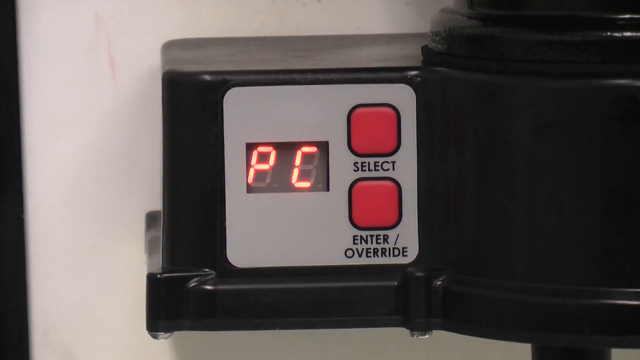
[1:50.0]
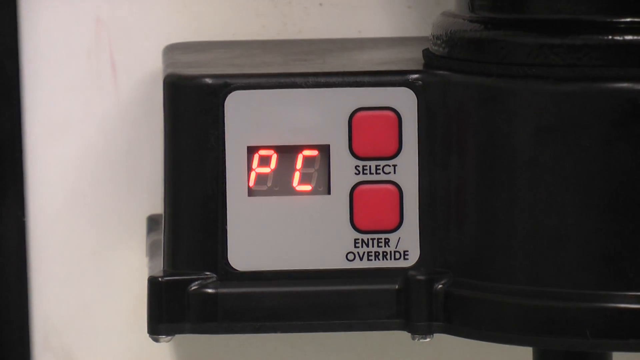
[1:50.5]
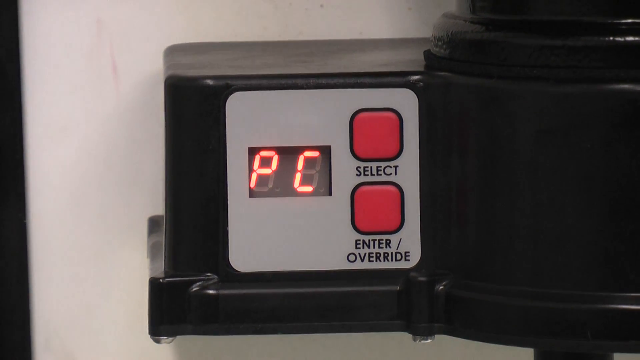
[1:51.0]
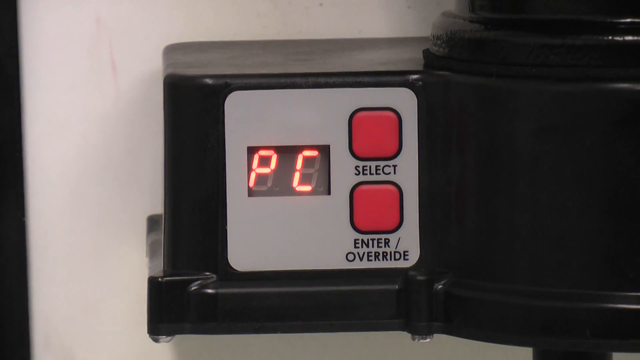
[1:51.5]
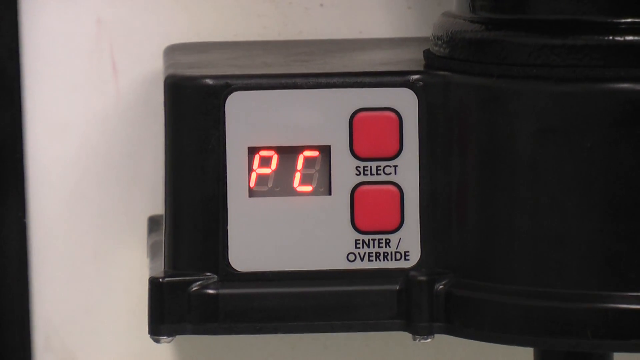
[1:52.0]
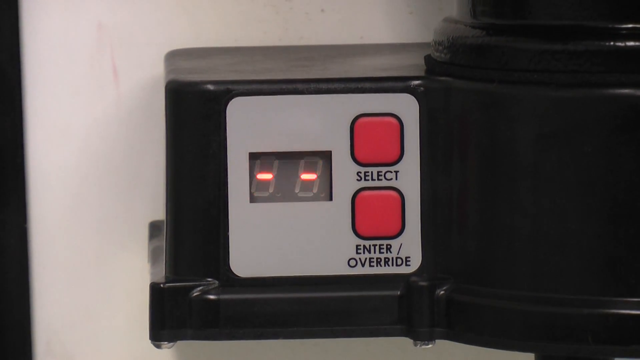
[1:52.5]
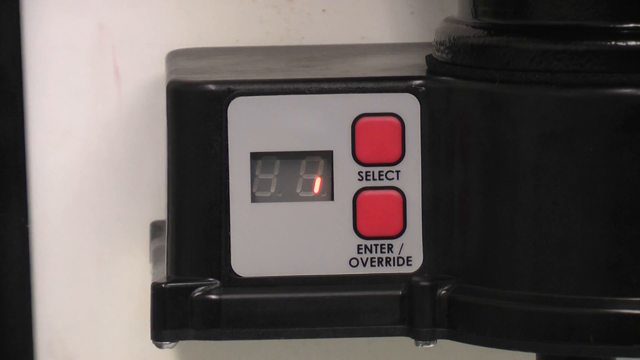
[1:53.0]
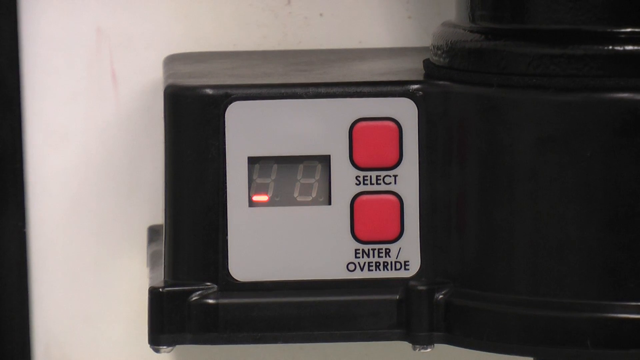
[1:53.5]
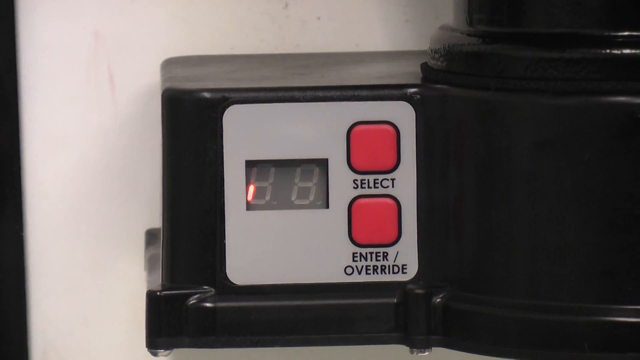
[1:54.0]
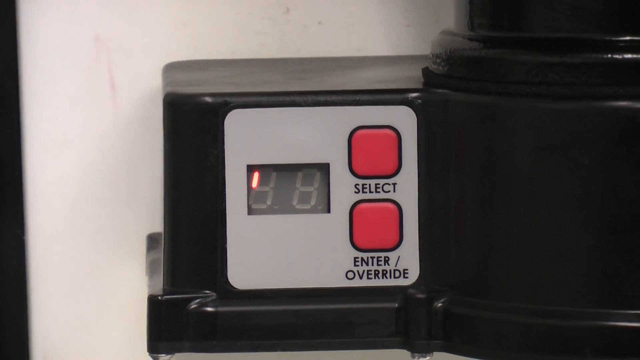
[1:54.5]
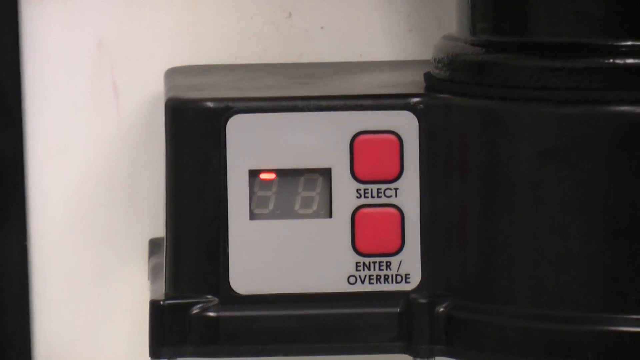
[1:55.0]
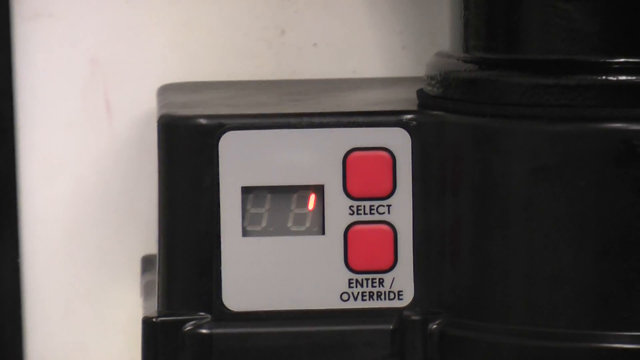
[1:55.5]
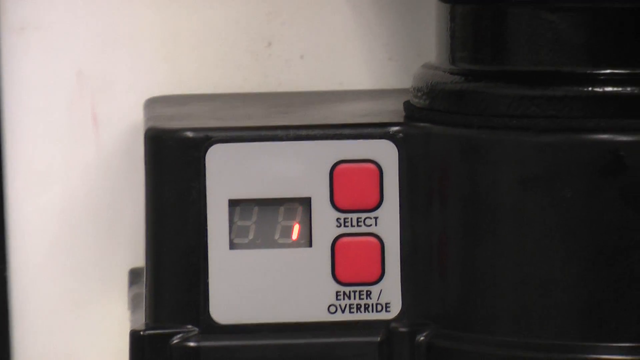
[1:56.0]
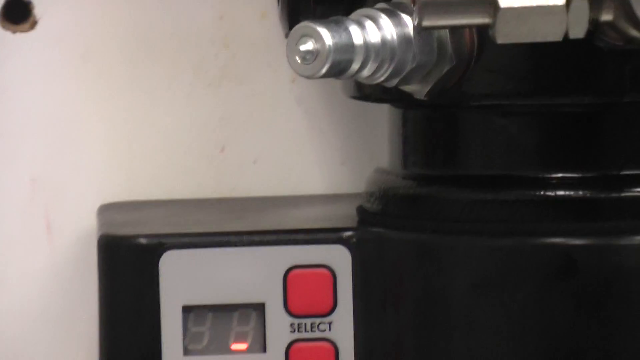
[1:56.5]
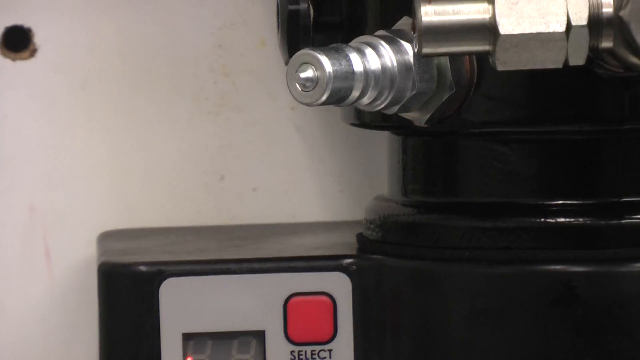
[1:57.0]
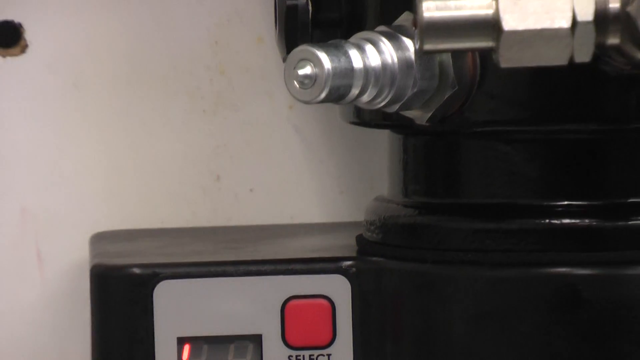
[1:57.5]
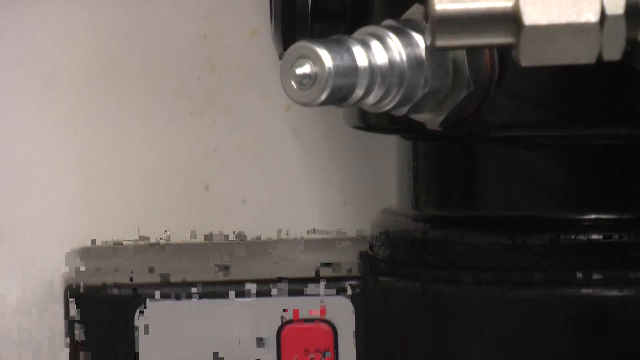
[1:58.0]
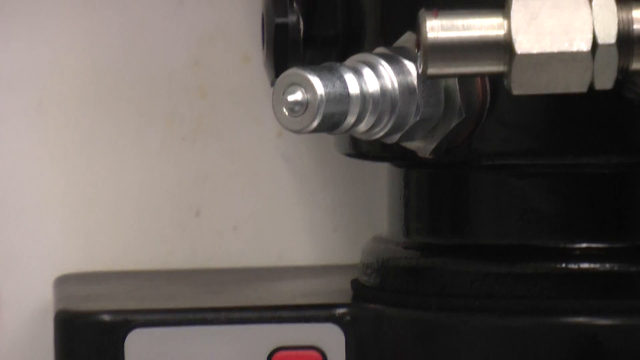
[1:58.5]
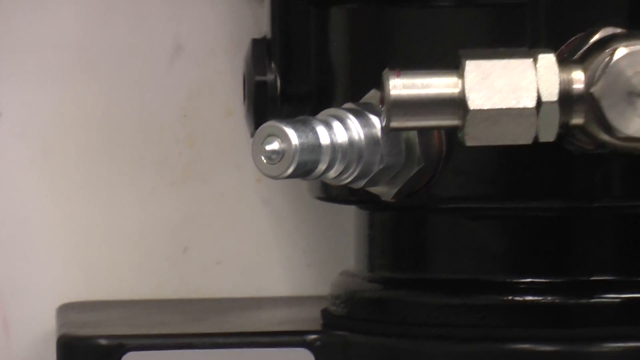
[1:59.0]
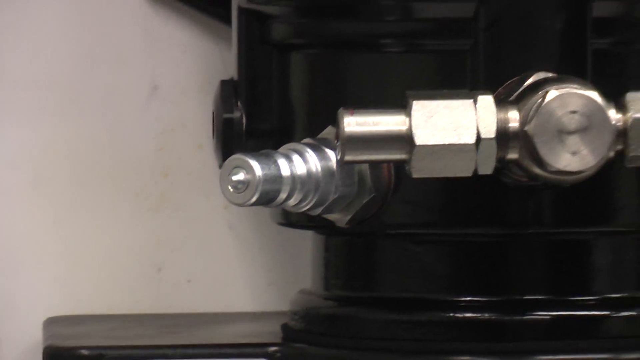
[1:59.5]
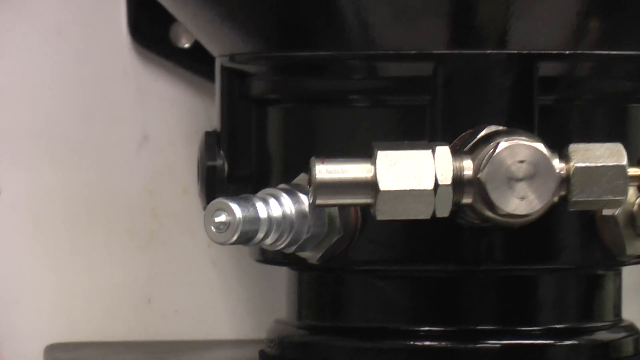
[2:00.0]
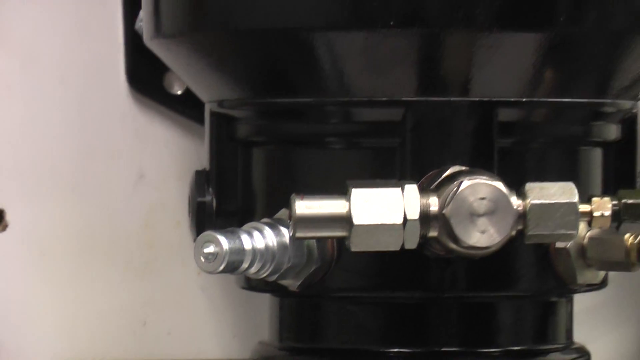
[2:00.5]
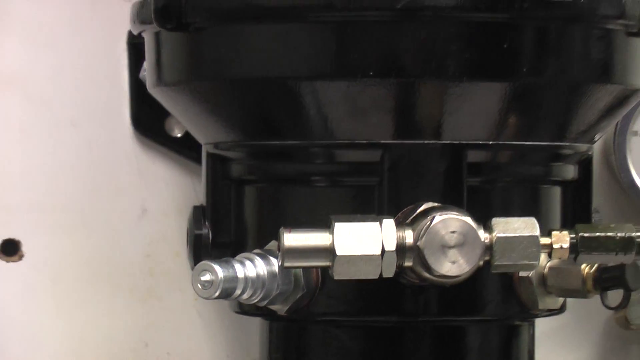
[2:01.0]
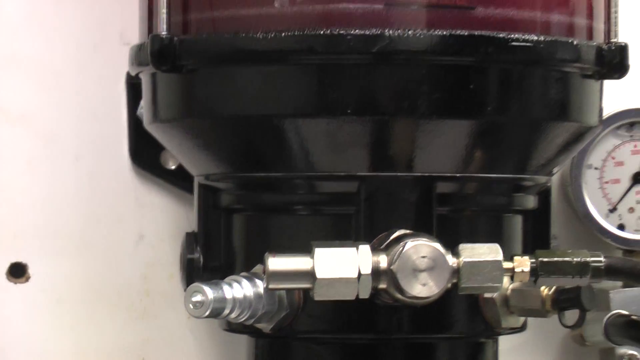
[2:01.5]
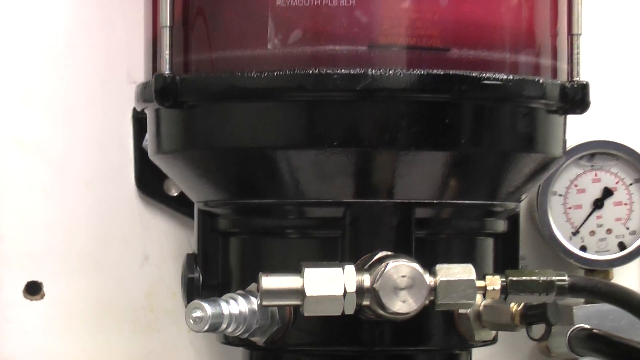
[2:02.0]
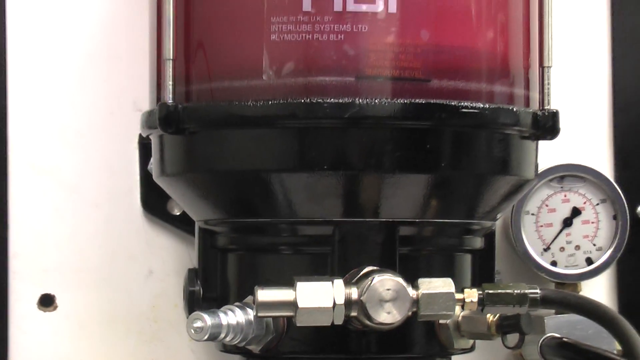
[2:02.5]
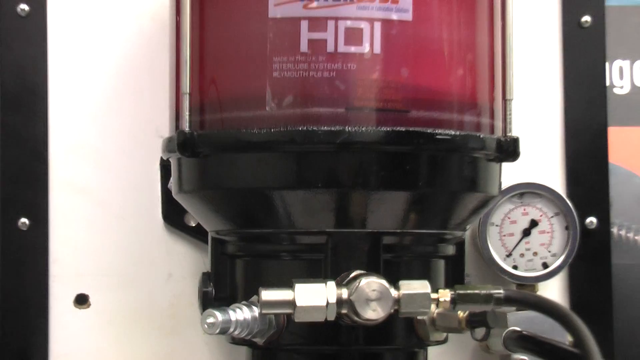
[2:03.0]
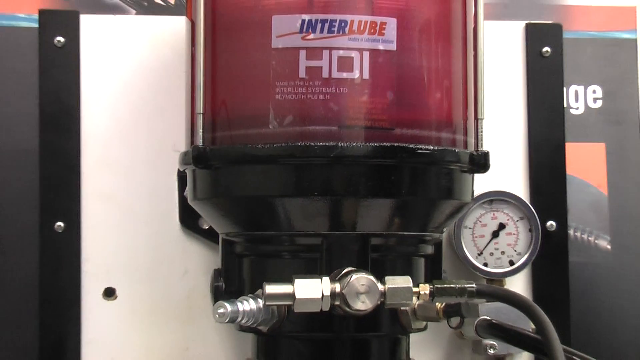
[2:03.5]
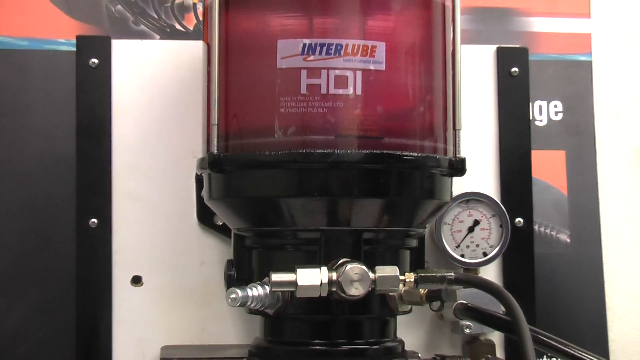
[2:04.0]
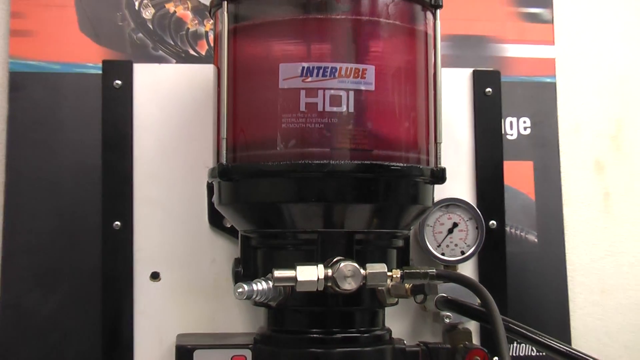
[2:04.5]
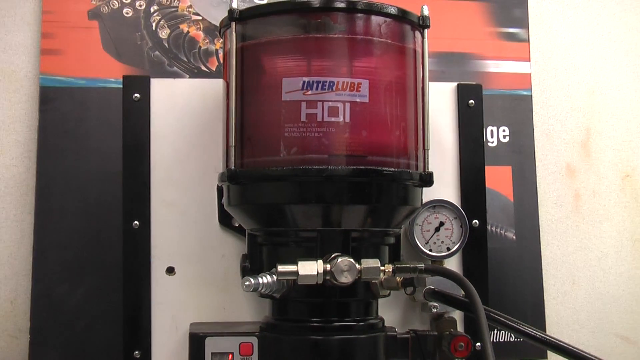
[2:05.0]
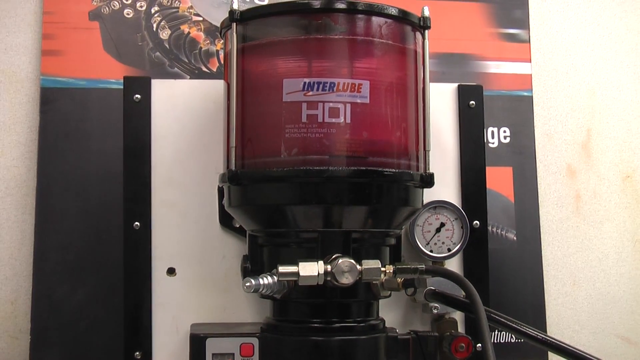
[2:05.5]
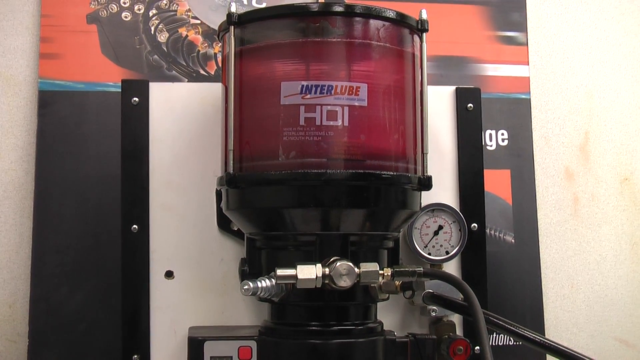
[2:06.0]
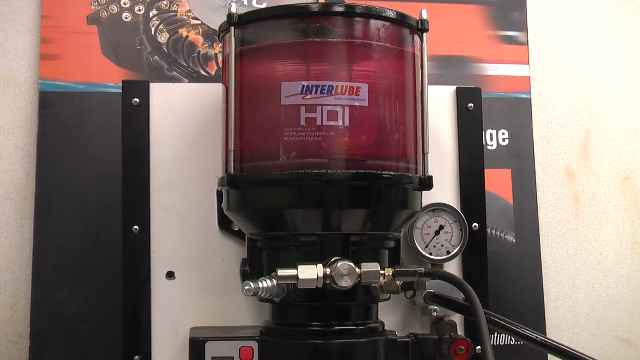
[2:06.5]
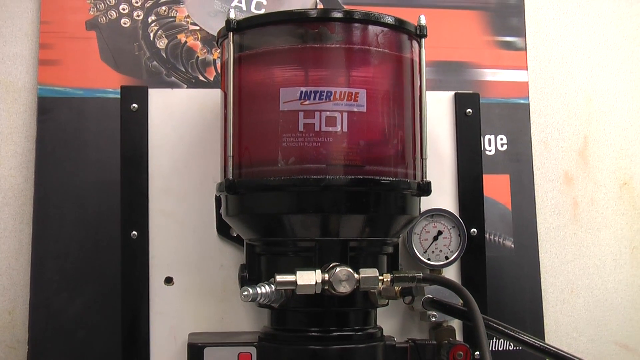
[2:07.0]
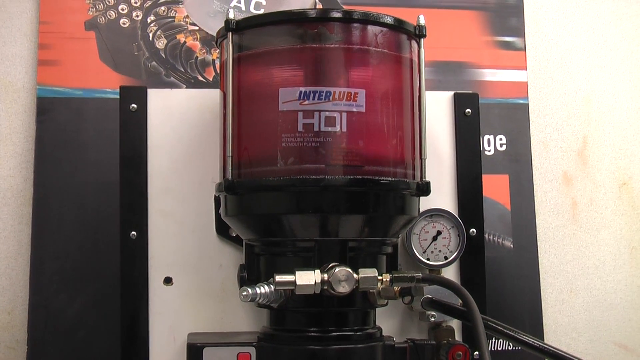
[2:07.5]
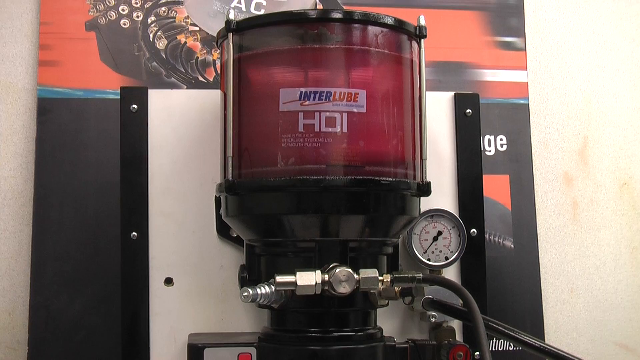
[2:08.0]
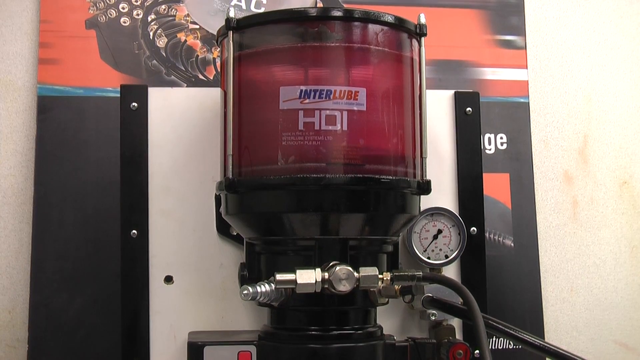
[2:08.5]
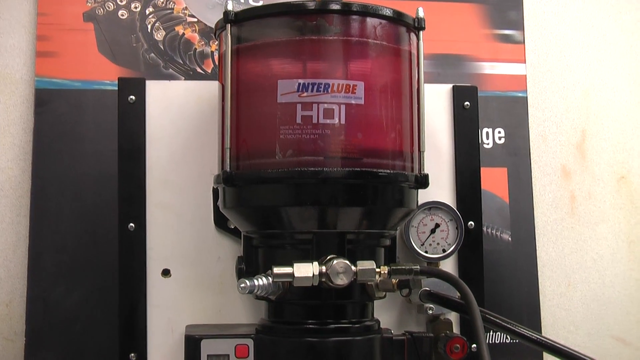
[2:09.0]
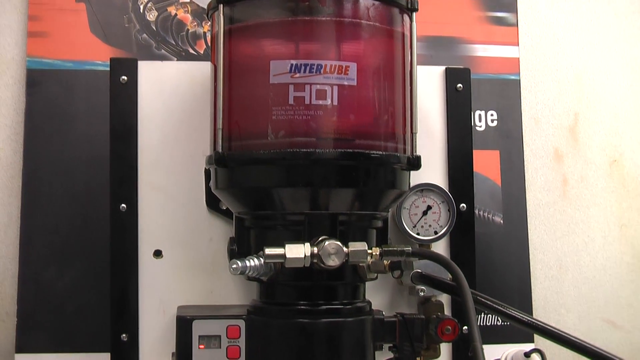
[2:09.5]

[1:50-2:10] A black machine has two red buttons on the side; the top one says "select" and the bottom one says "enter/override." The screen reads "PC," and then seems to show a loading screen, with a little red mark moving all over the screen. The camera zooms in to a silver metal part of the machine, revealing a small meter that says something about "HDI," with the brand apparently Interlube. The camera zooms out to show a big red tank with something going around inside it, and the text "HDI".